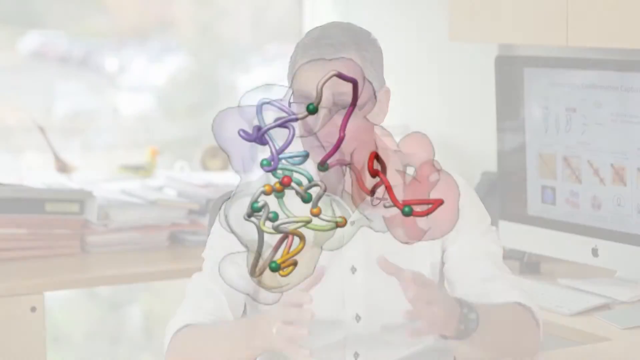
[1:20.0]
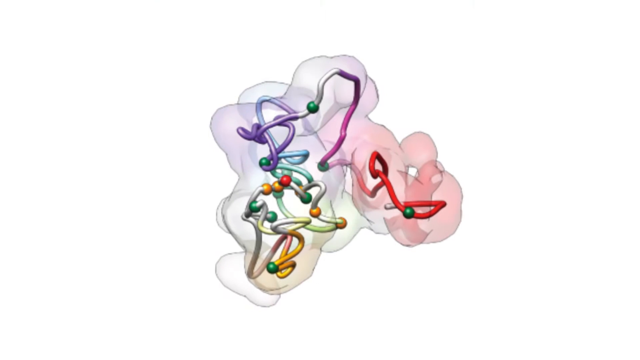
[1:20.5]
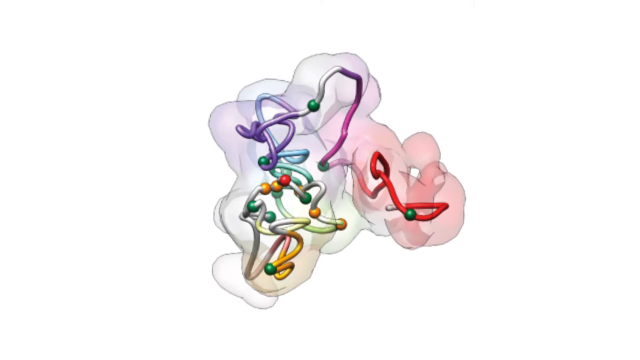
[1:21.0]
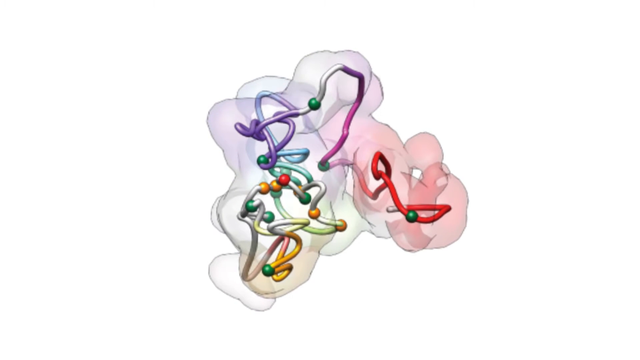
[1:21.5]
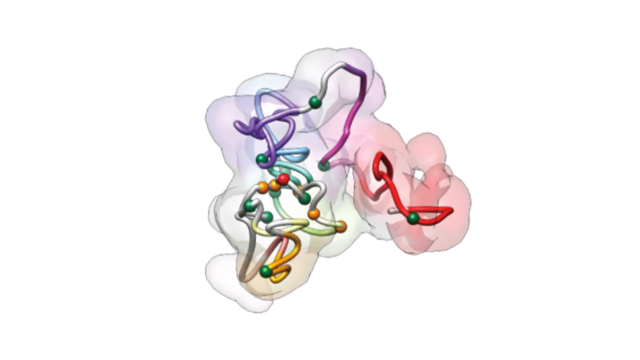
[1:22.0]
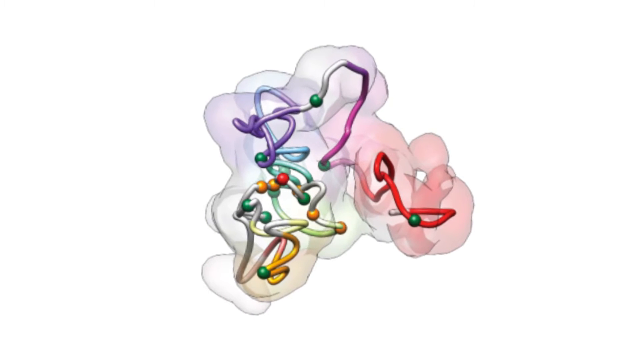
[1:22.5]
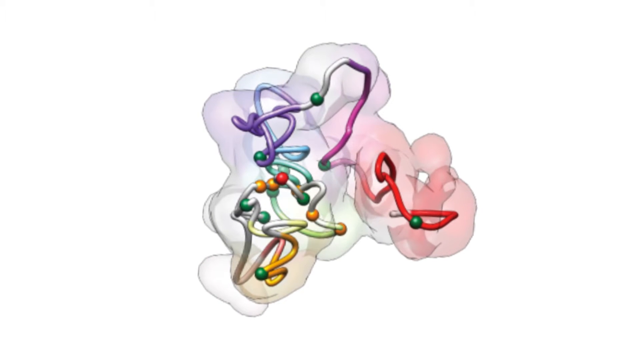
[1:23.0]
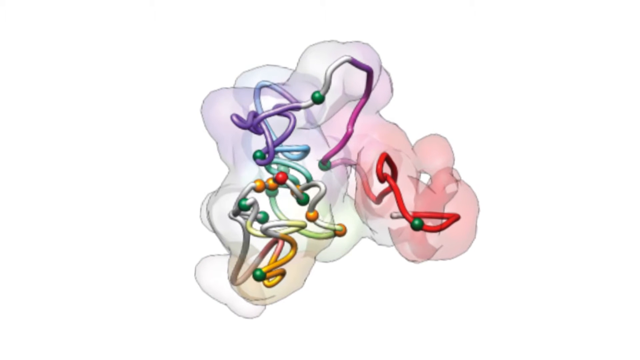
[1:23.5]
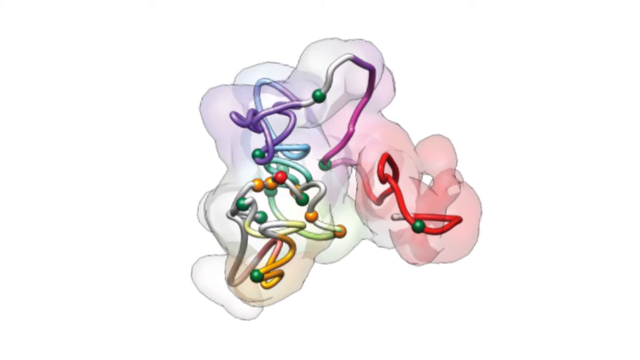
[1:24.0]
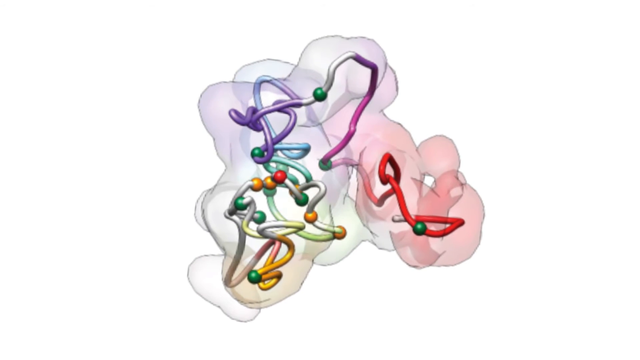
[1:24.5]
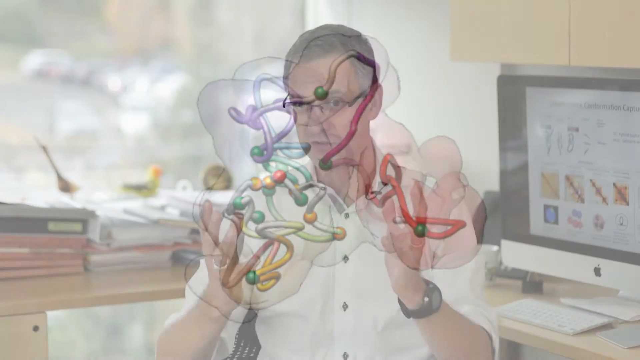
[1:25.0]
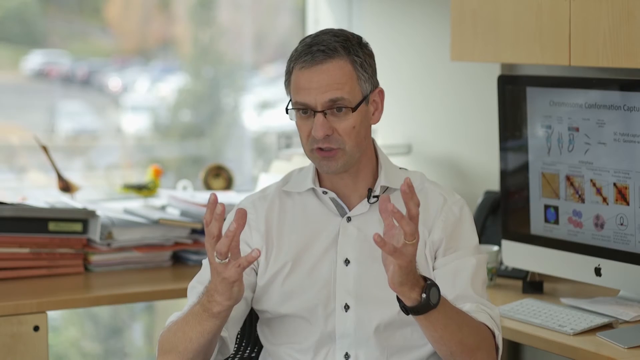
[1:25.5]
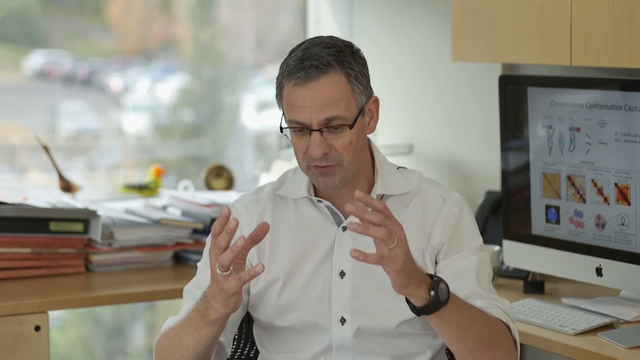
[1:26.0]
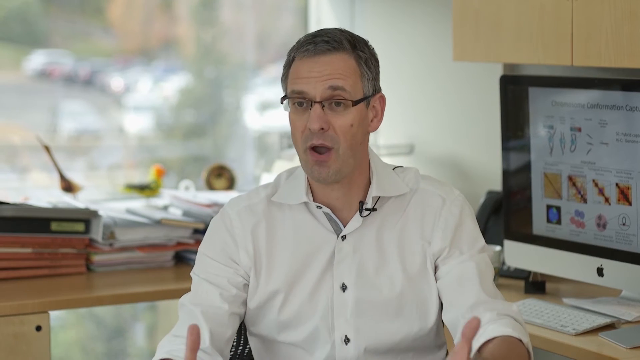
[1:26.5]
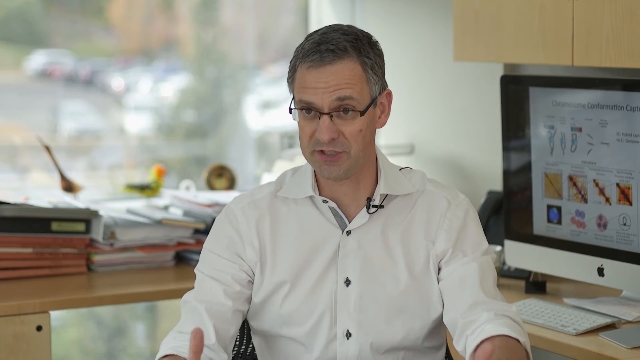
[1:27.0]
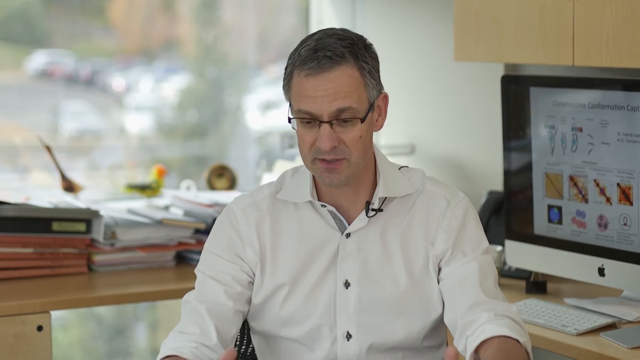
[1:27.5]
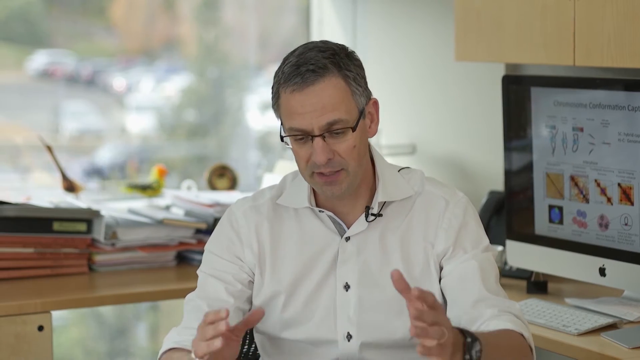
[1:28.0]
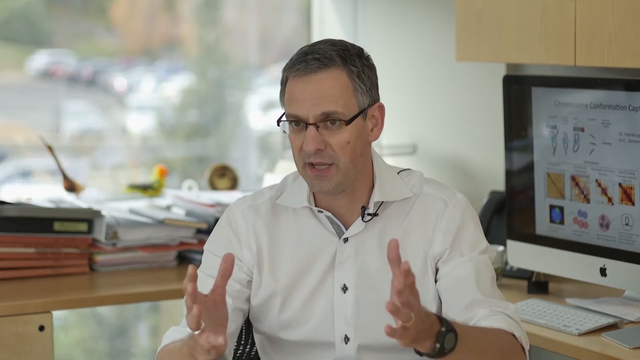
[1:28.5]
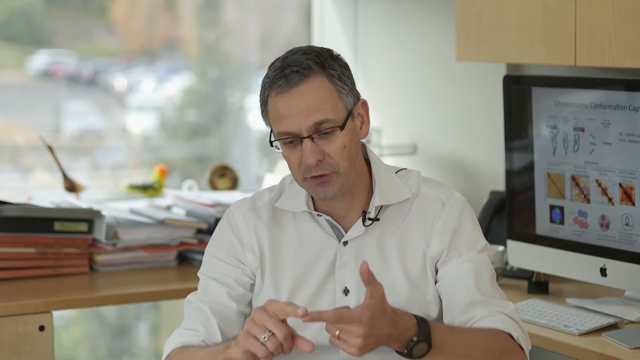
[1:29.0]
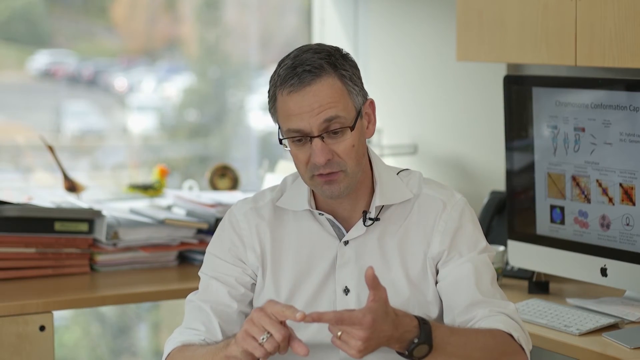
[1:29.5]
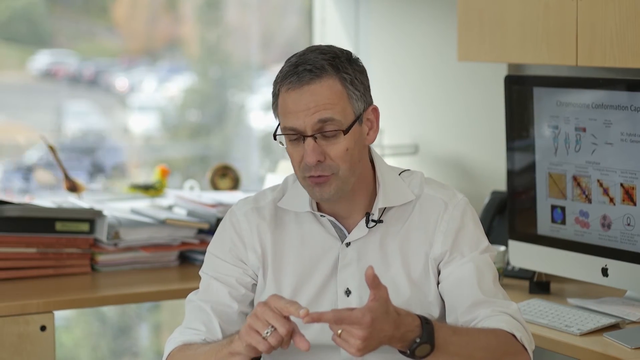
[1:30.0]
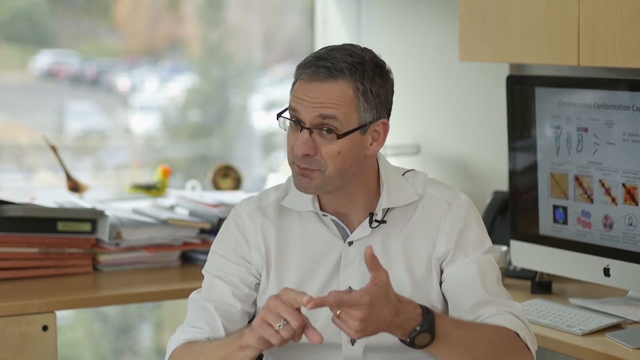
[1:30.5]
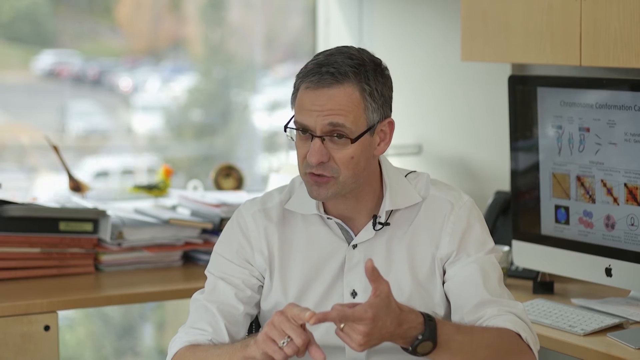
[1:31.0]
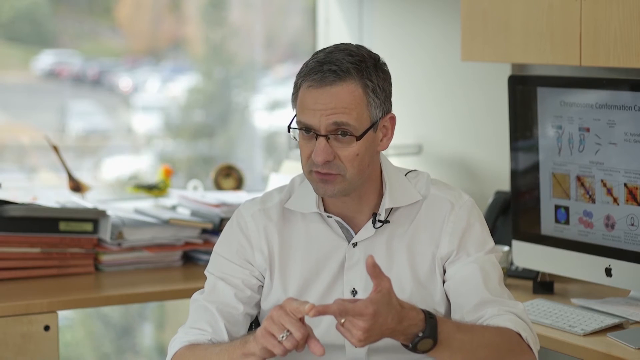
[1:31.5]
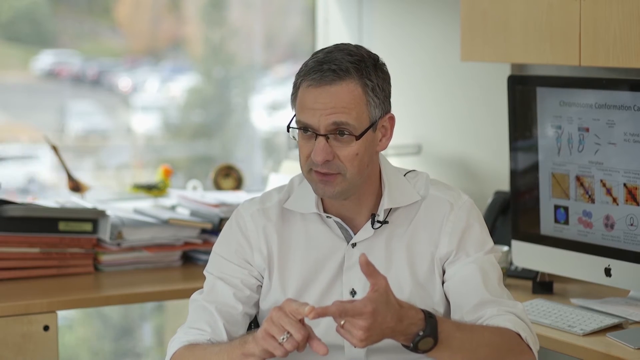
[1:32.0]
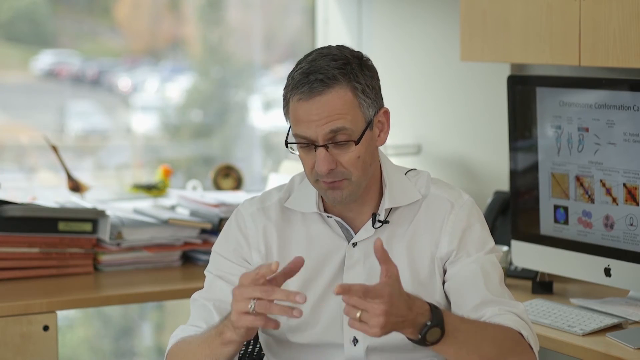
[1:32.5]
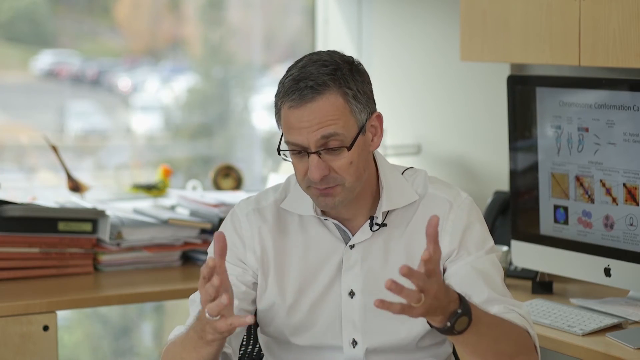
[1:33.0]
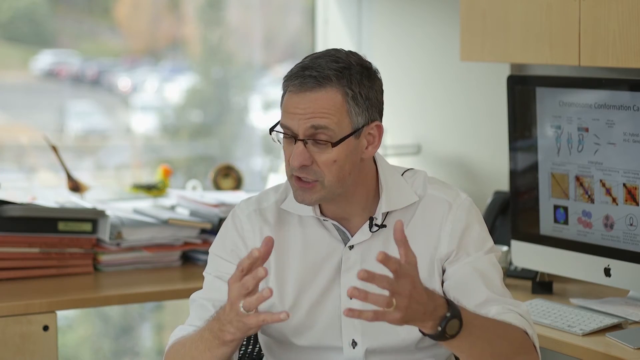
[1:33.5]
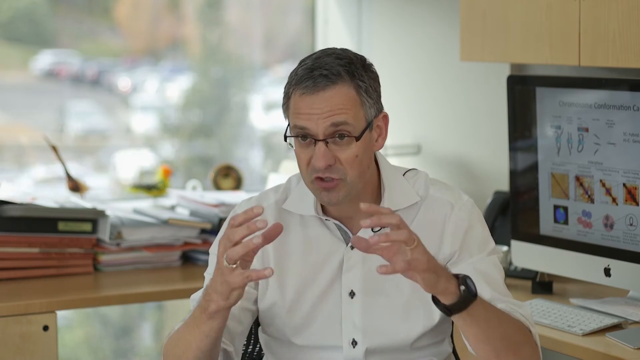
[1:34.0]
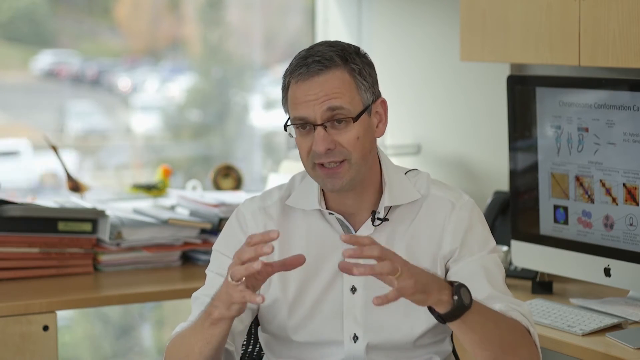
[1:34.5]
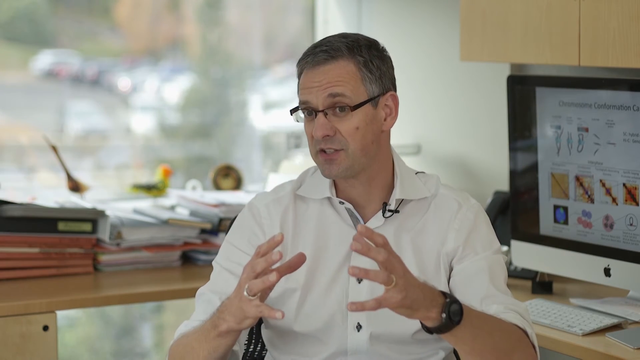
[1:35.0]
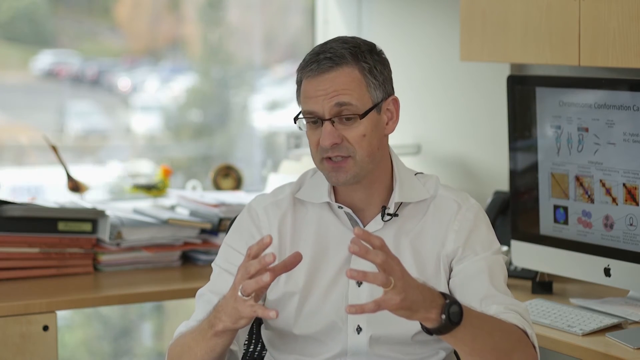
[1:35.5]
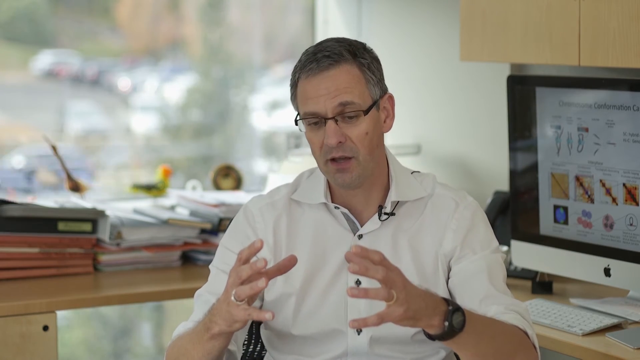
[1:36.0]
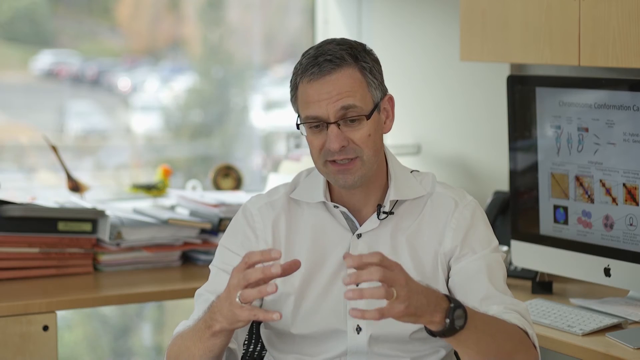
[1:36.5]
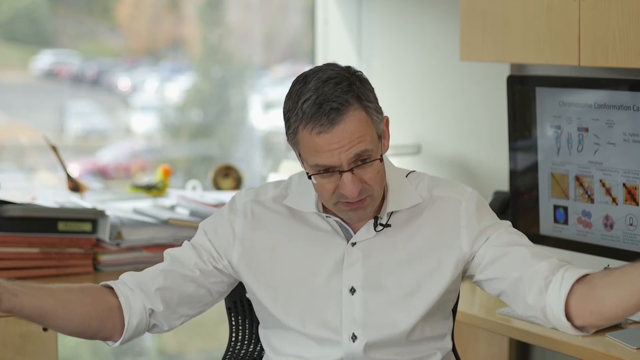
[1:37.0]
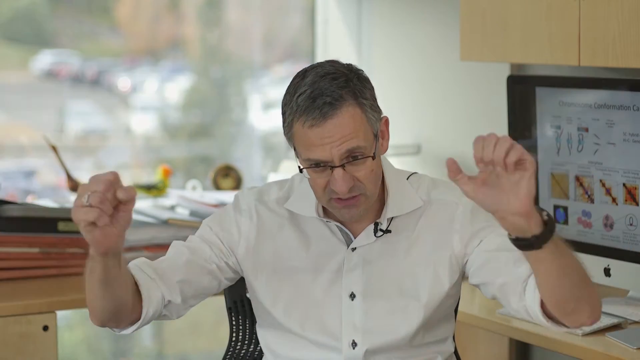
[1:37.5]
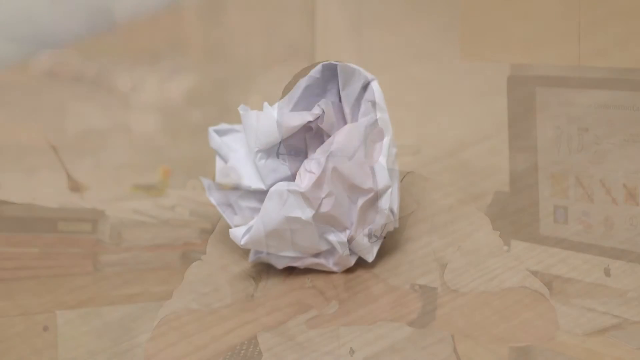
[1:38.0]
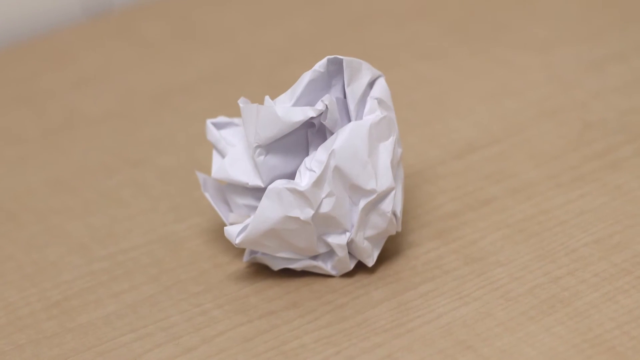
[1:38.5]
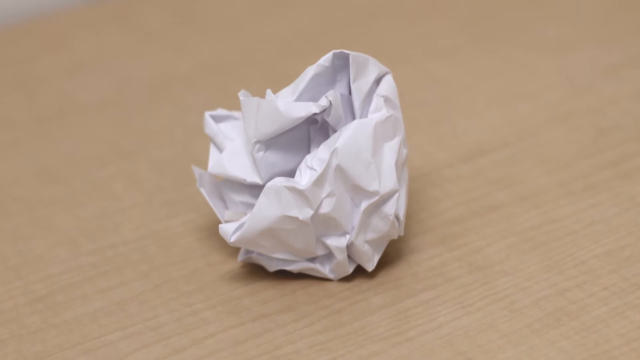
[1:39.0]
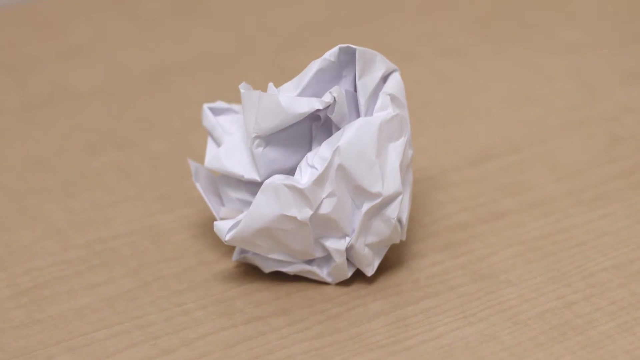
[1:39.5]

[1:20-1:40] A multicolored blob, something like a cell or an atom, appears first, with little tubes of two different colors inside it. It looks very 3D and see-through, with many different colors and little balls. The view returns to the professor in a white shirt with a black microphone attached to his collar, a black watch and a wedding ring, with a computer next to him. He is apparently in his office, with a lot of books and papers. Through a big window it is daytime, and a big parking lot with a lot of cars is visible, with some trees faintly in the background. He talks with his hands and points his finger. The last part shows a balled-up piece of paper on the desk.